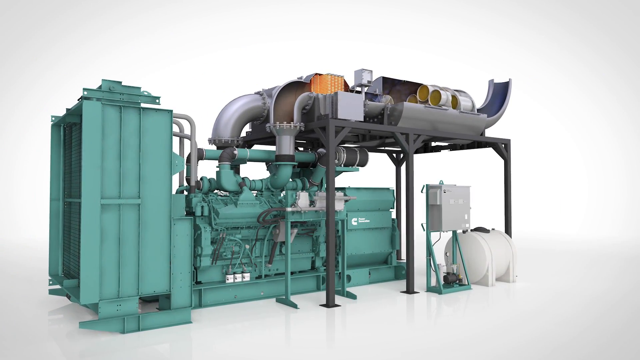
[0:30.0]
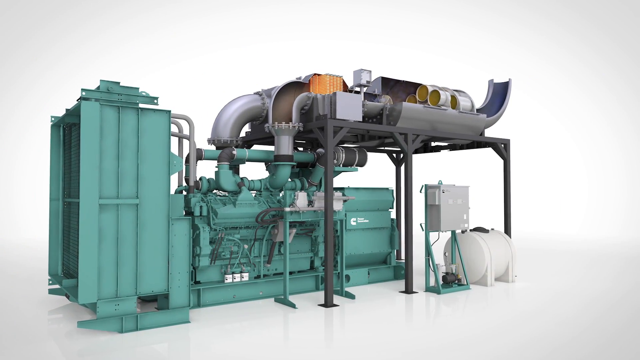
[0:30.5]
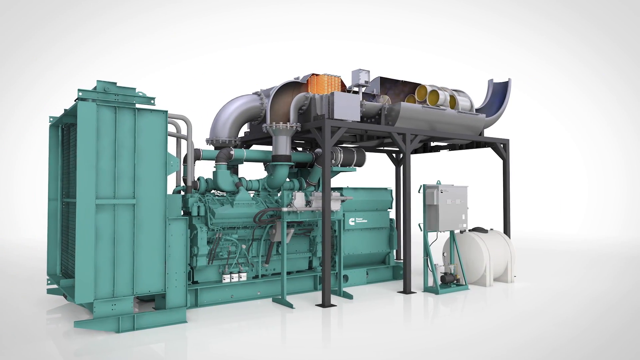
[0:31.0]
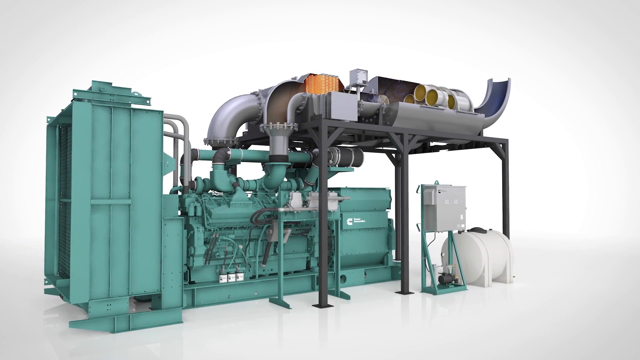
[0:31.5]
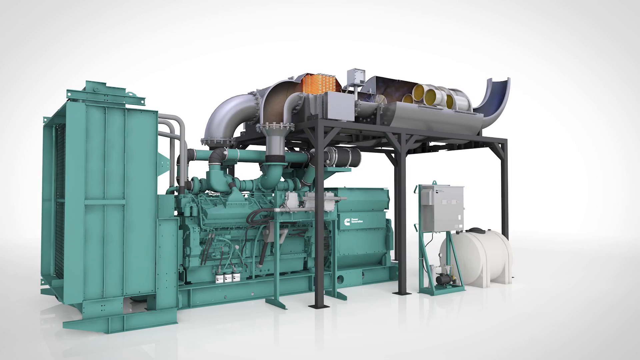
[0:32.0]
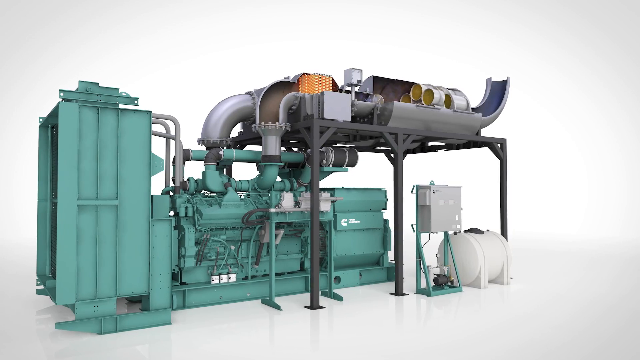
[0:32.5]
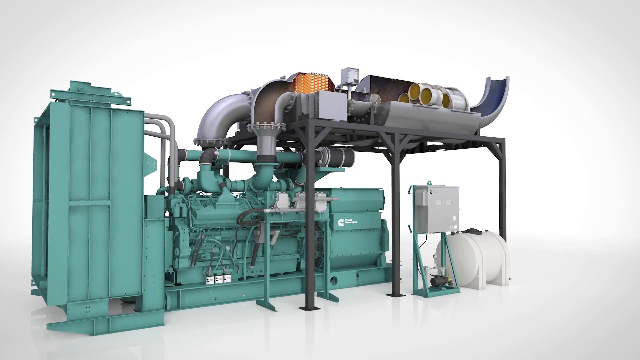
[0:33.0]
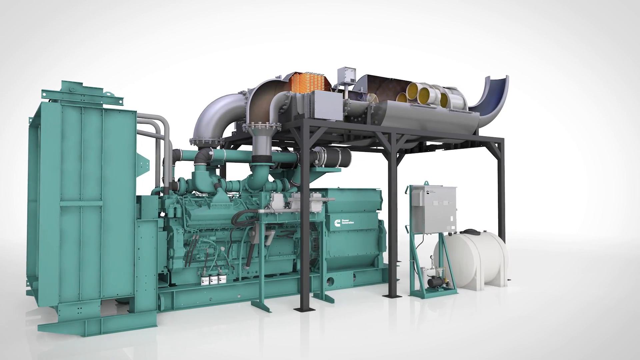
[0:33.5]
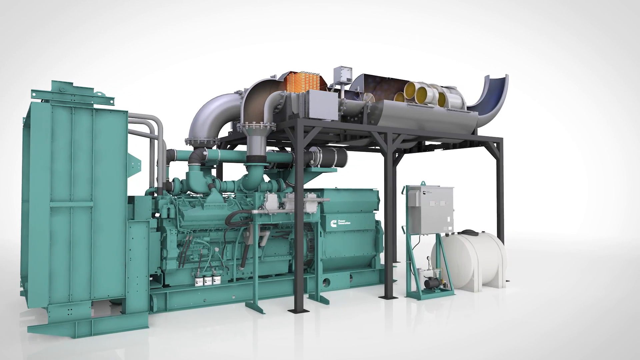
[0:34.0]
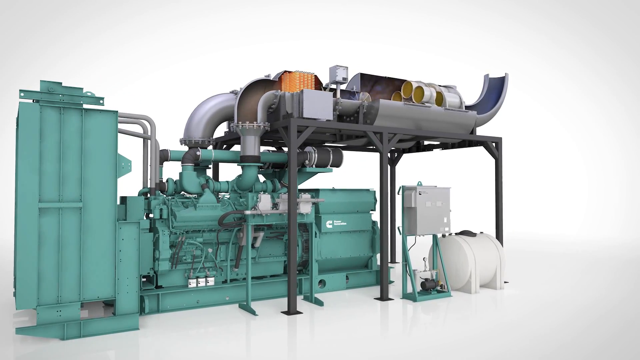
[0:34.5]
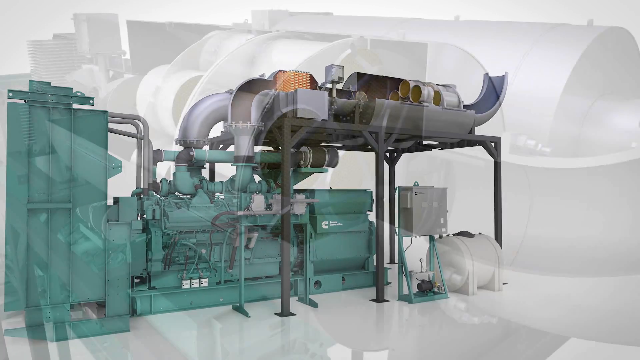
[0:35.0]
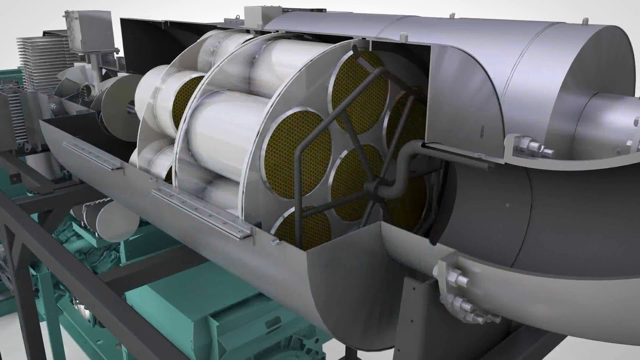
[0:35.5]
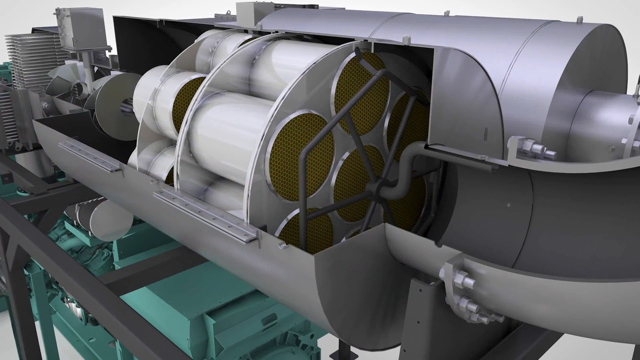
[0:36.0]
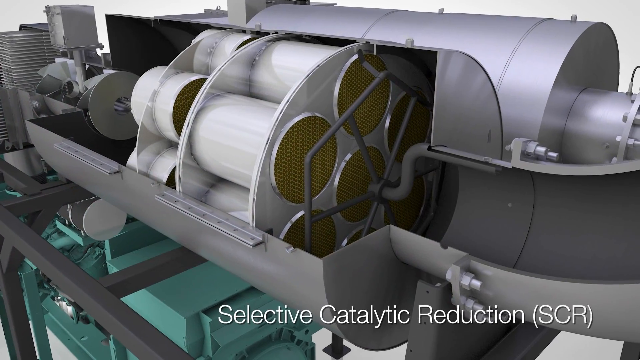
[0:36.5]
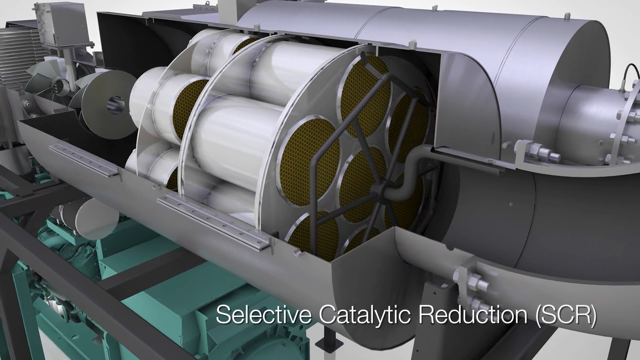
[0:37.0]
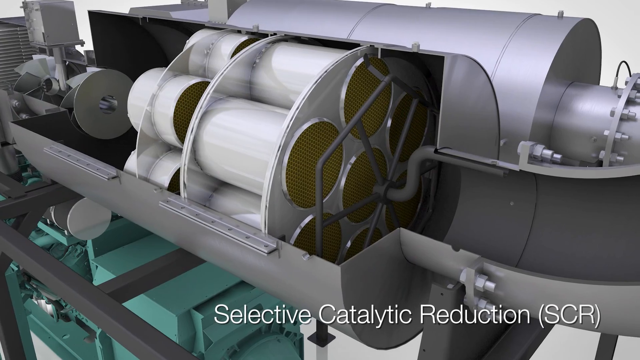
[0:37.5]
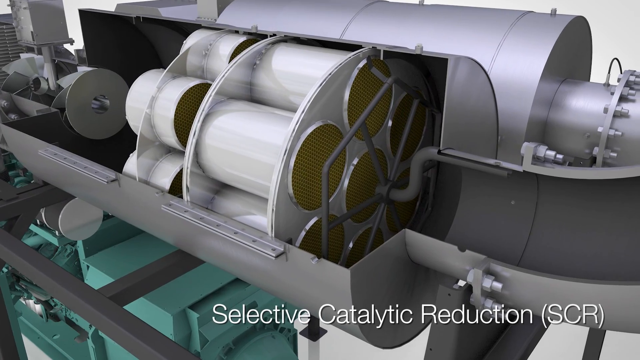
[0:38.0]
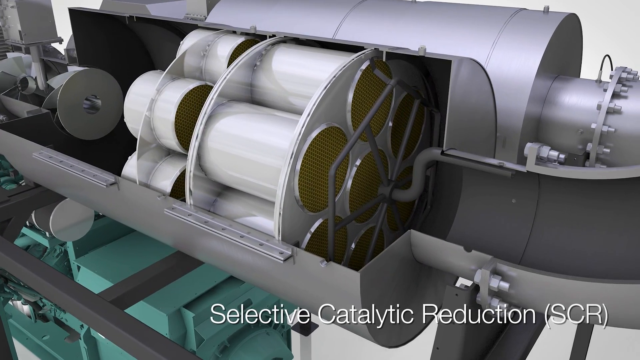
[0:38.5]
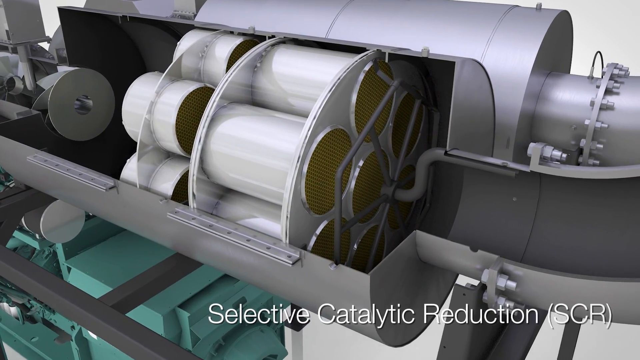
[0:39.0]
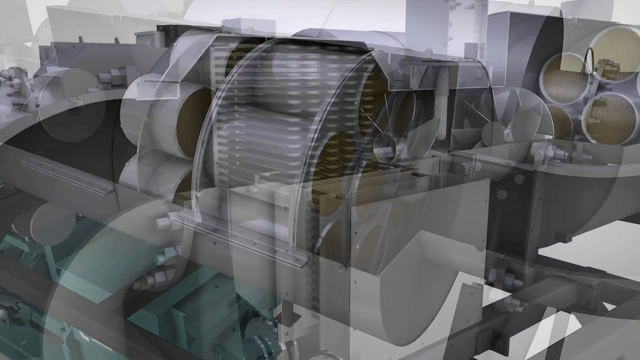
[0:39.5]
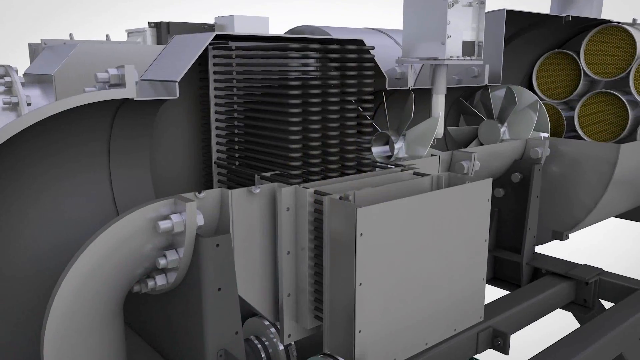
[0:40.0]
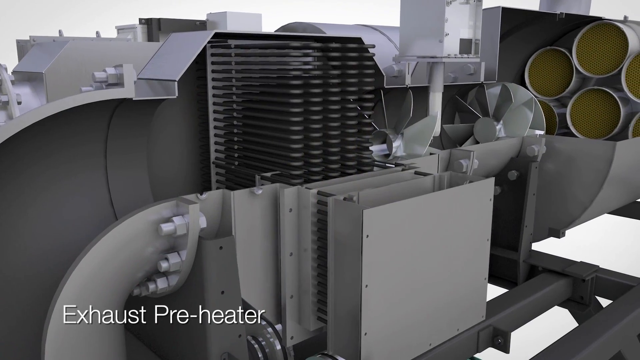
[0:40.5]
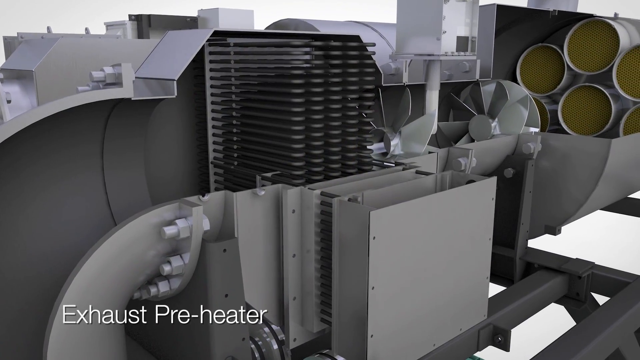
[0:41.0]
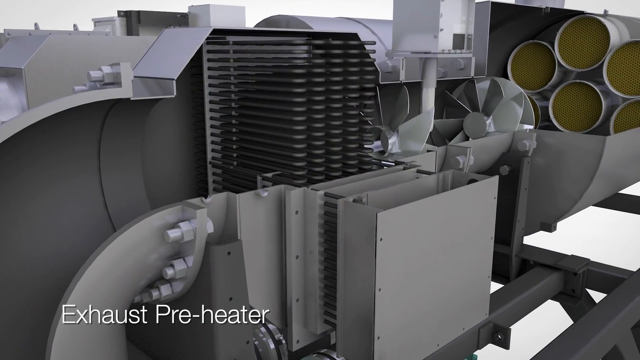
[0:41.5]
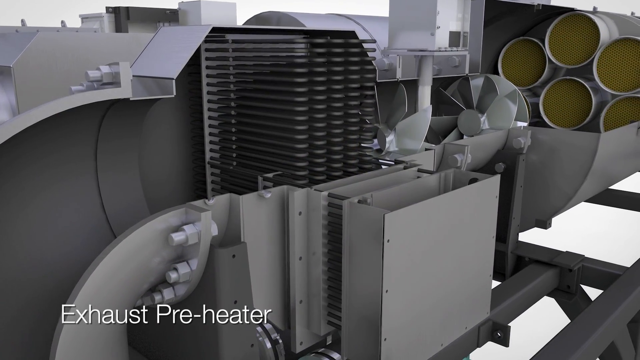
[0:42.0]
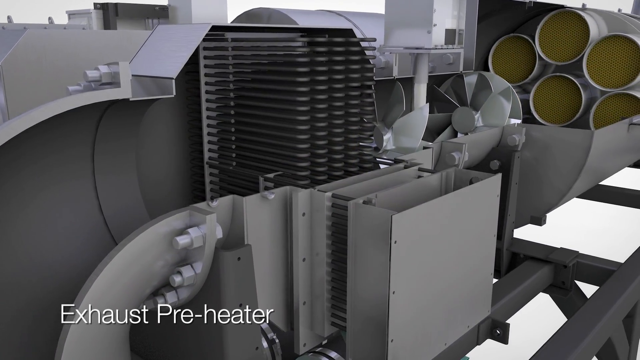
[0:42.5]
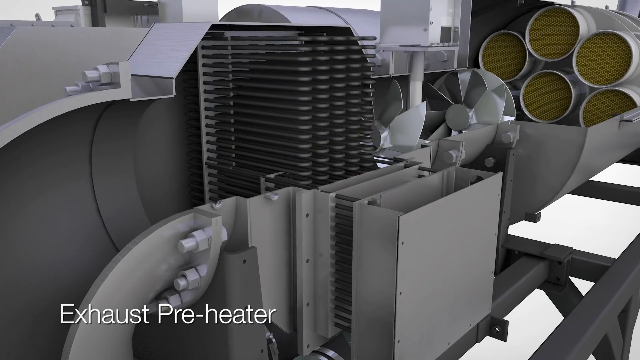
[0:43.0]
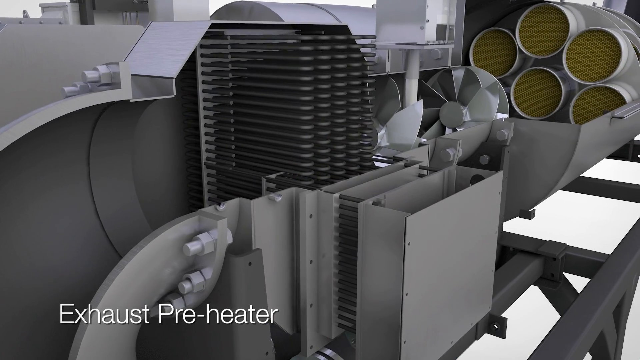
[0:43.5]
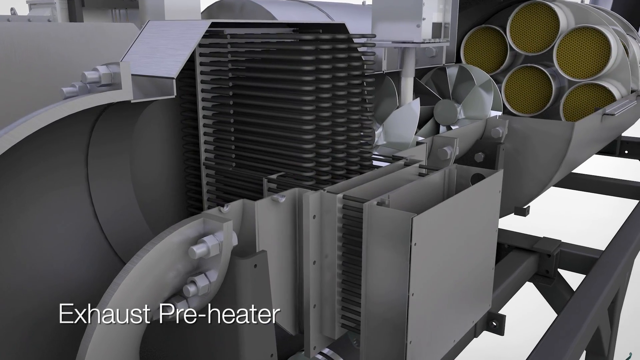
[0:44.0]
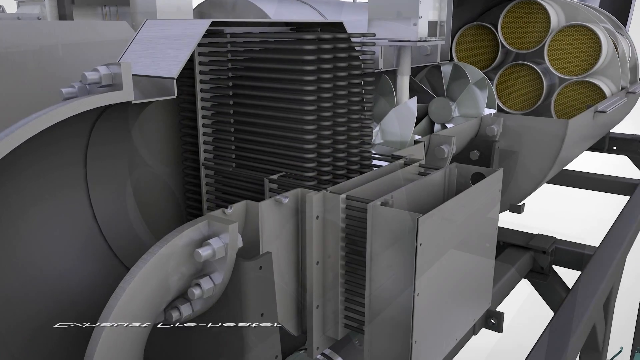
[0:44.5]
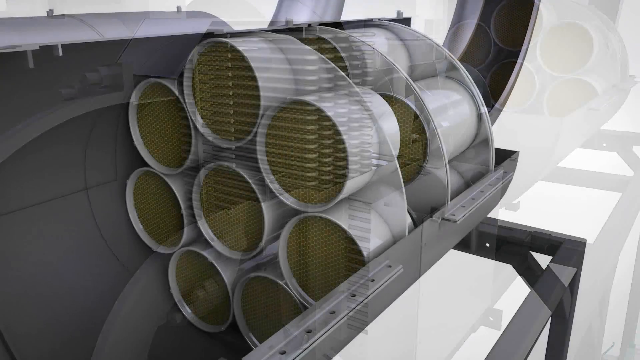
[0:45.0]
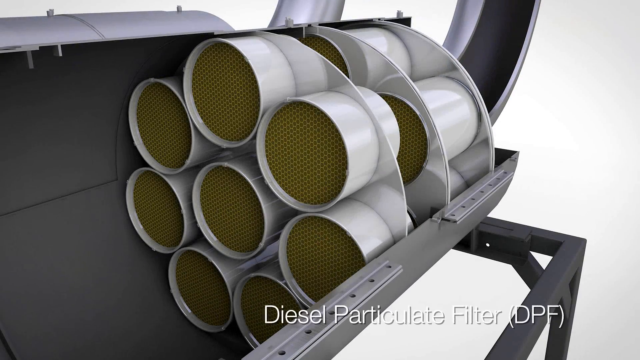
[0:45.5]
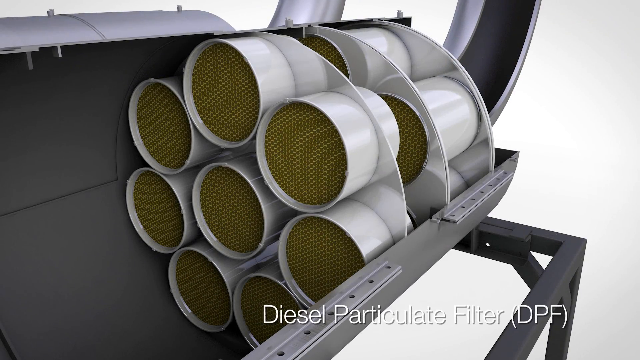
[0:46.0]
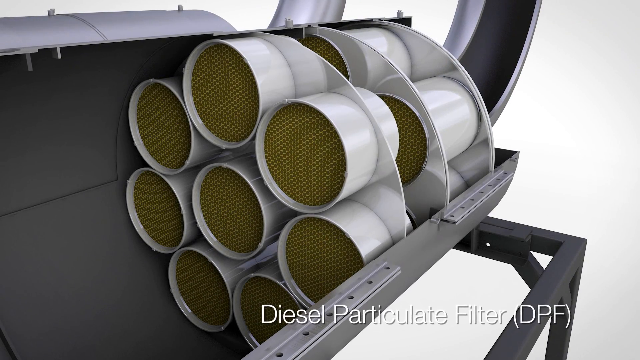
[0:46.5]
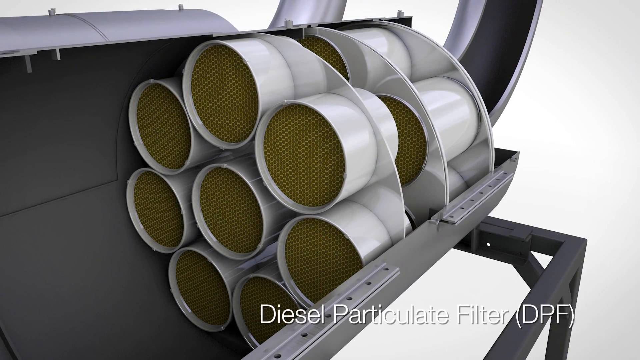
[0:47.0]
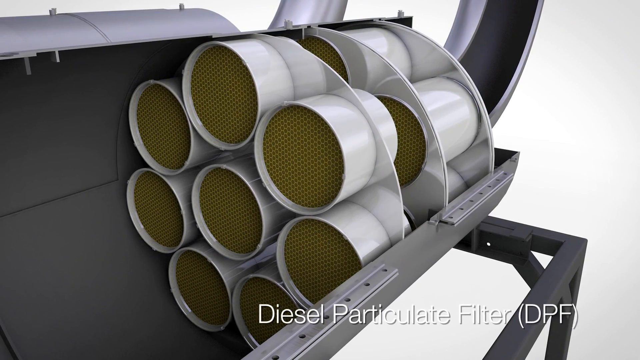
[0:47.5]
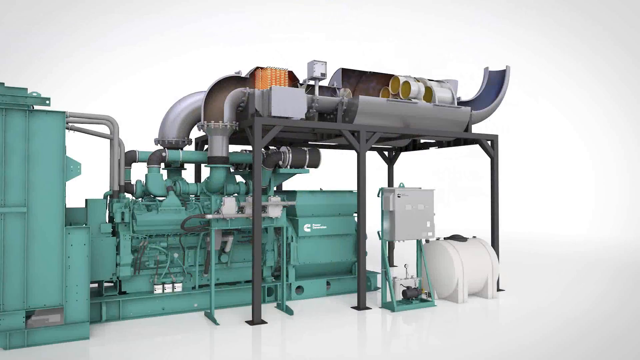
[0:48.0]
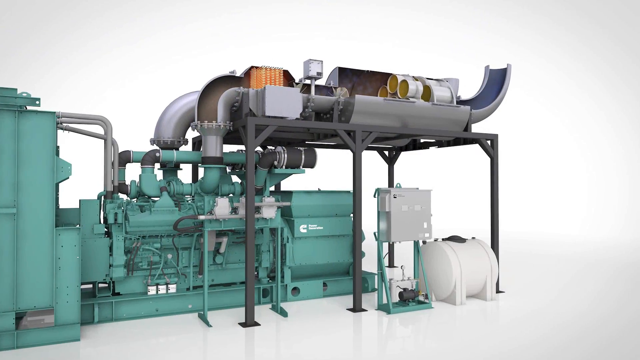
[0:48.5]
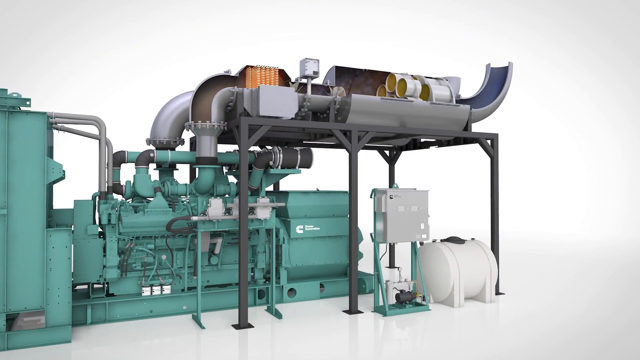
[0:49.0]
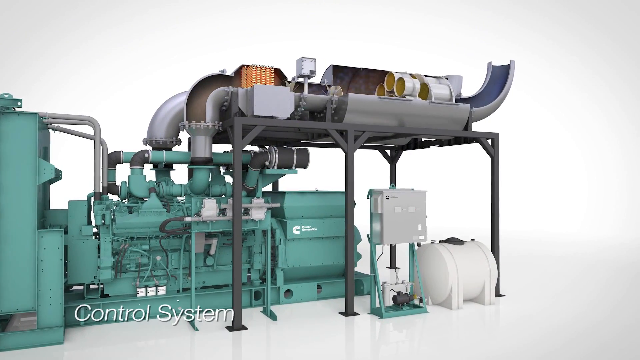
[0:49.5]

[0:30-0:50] The video pans over to the prototype of the machine and zooms in on one of the large cylinders, with a caption at the bottom right reading "selective catalytic reduction." Another image shows what is apparently the heater, with a caption at the bottom left reading "exhaust preheater." Zooming in on the cylinder, several smaller cylinders inside it make up a circle; this part has a bunch of yellow tubes and is identified as the diesel particulate filter. The entire contraption is then shown, with an arrow pointing to another part of it. The visuals are computer generated, a prototype made on the computer, set against a very clean white background, and the images are clearly not real life.